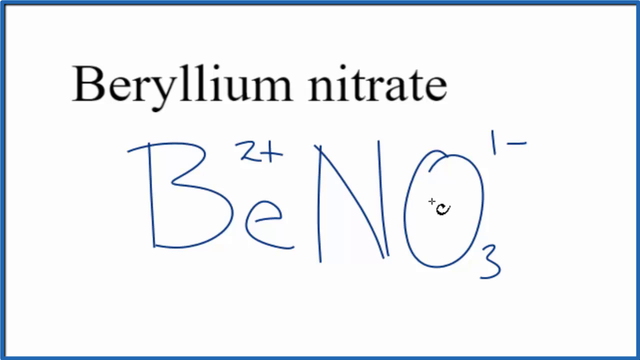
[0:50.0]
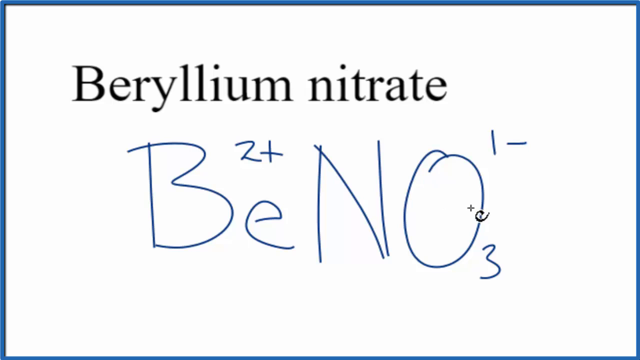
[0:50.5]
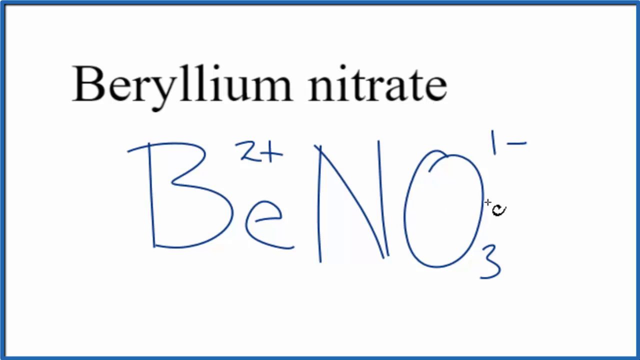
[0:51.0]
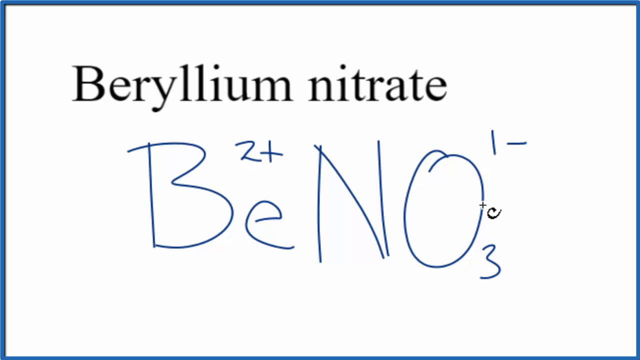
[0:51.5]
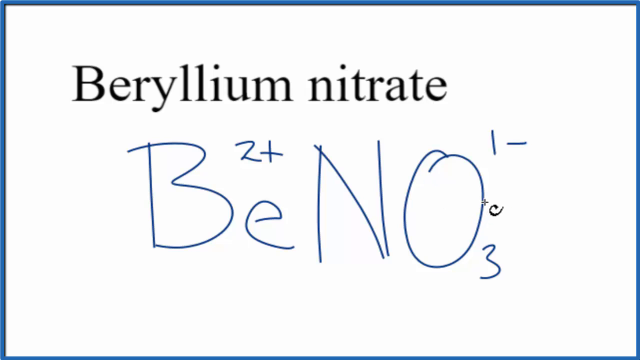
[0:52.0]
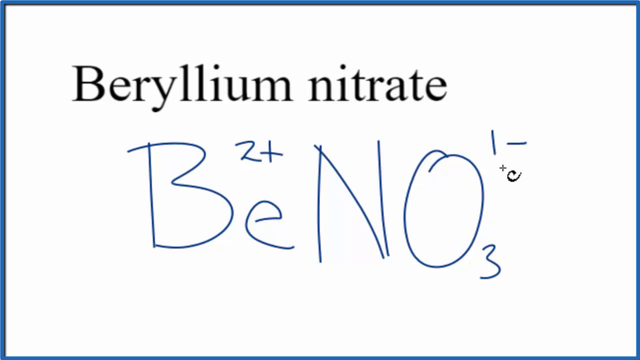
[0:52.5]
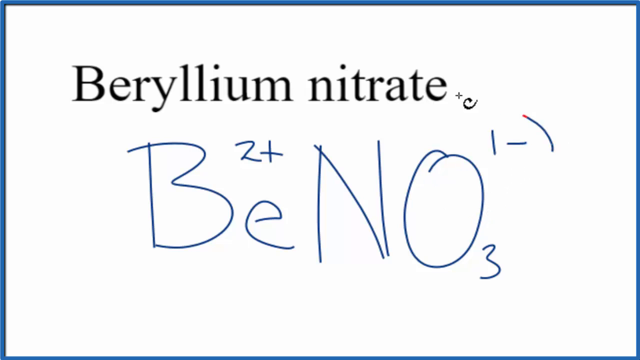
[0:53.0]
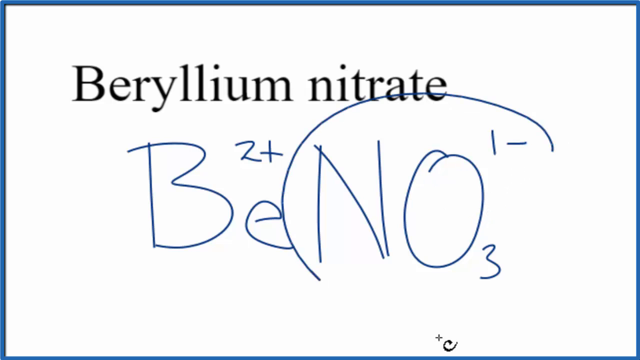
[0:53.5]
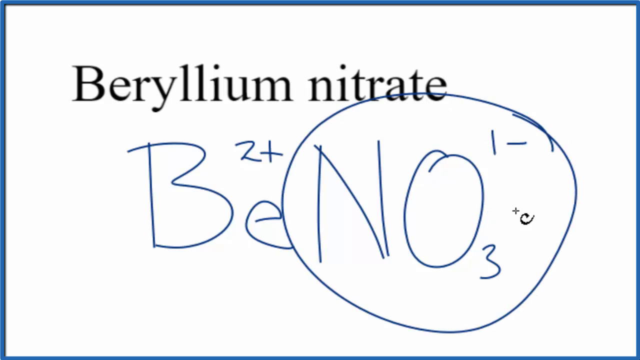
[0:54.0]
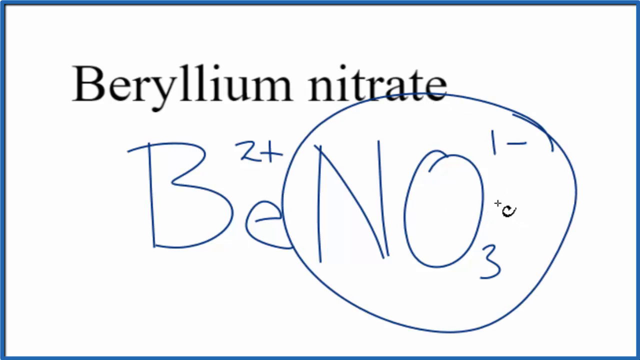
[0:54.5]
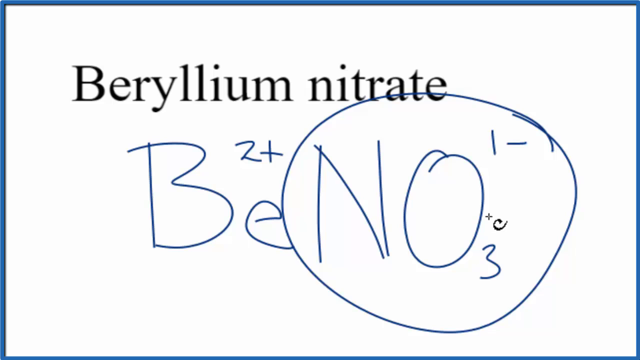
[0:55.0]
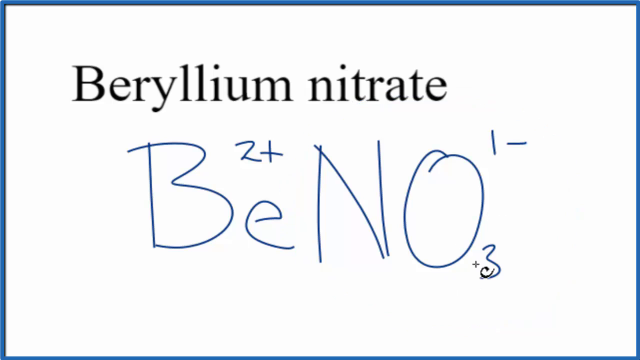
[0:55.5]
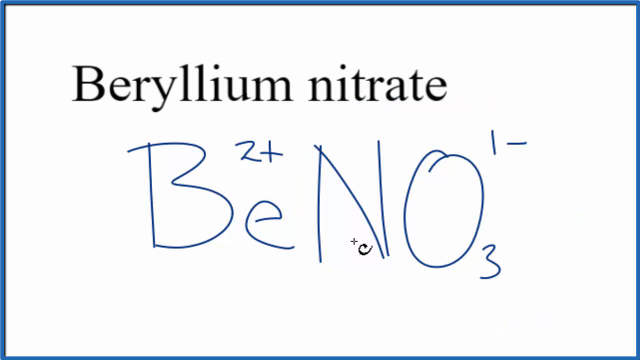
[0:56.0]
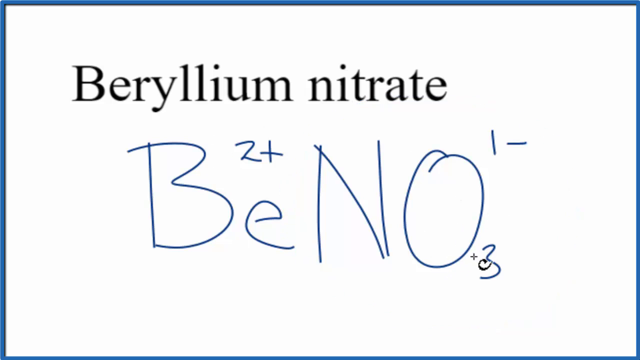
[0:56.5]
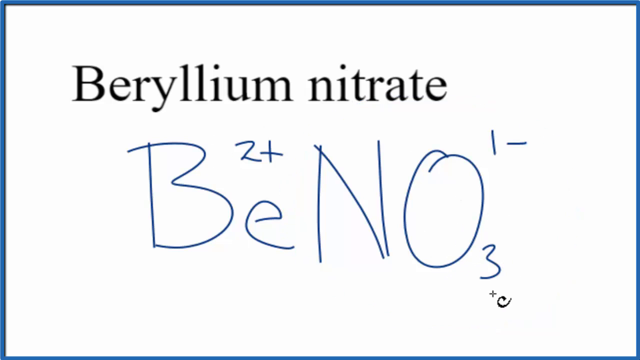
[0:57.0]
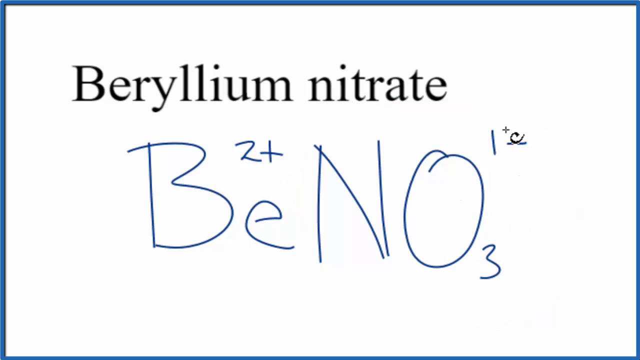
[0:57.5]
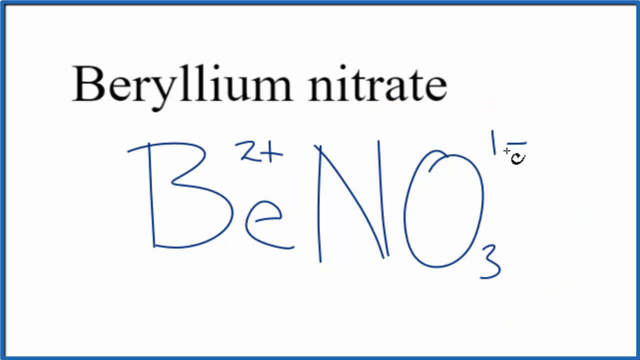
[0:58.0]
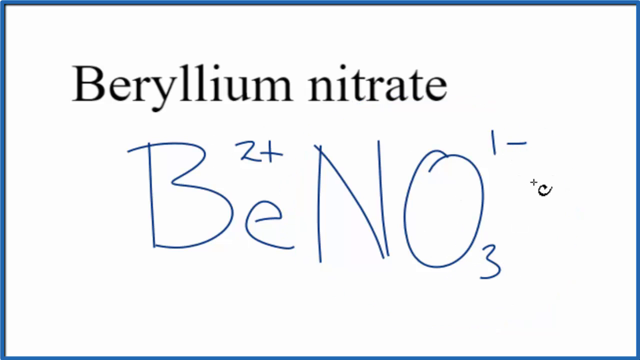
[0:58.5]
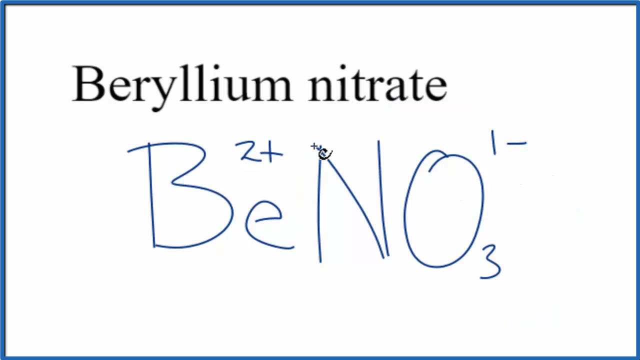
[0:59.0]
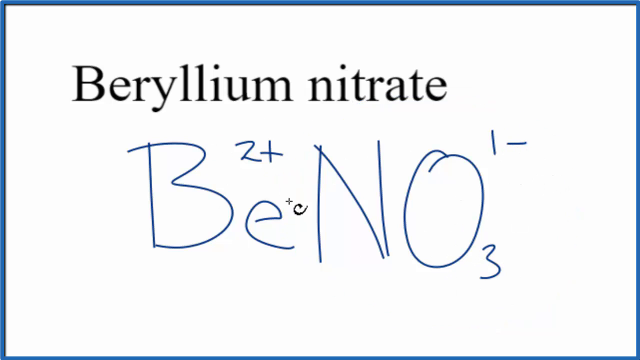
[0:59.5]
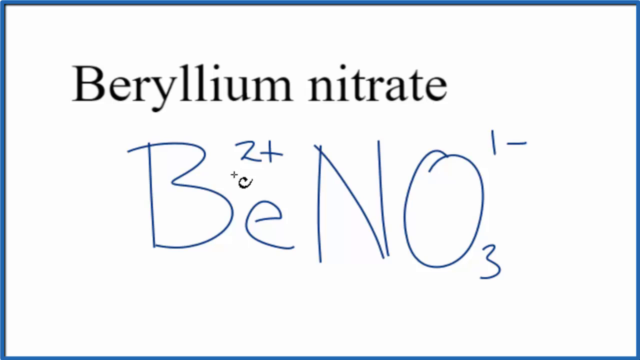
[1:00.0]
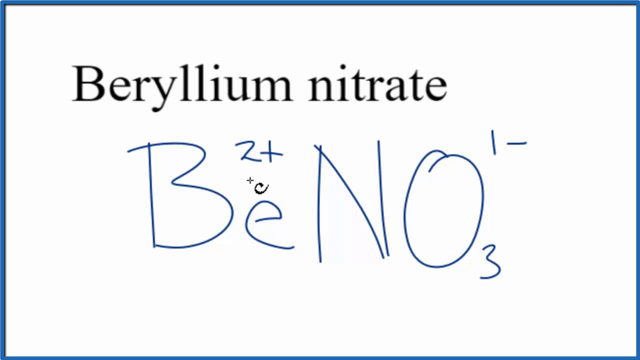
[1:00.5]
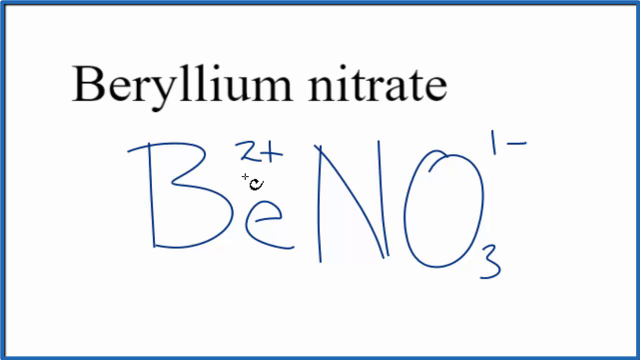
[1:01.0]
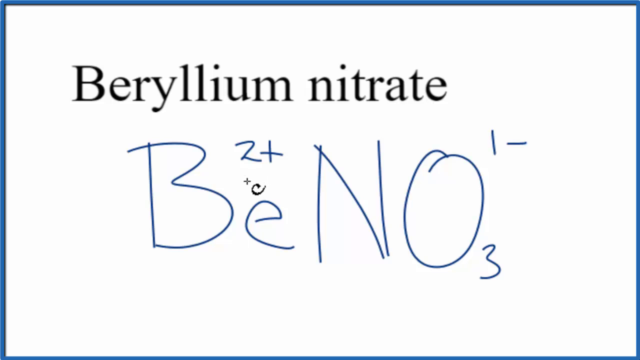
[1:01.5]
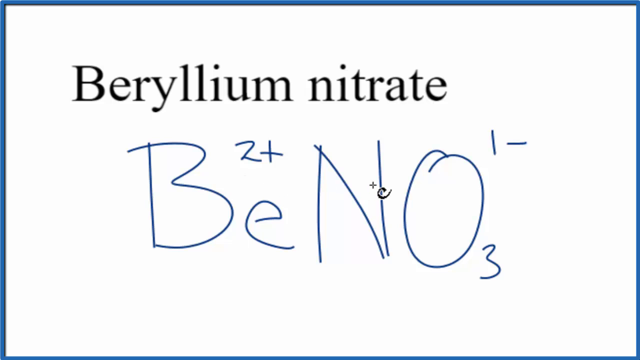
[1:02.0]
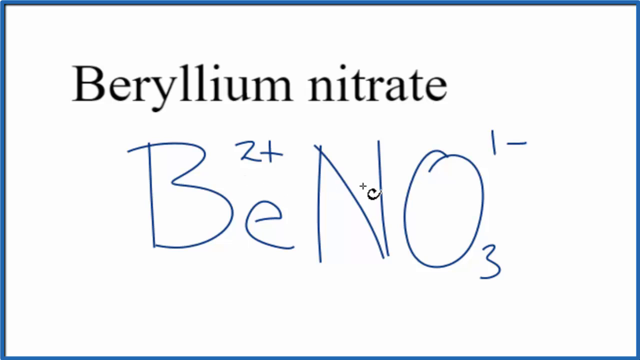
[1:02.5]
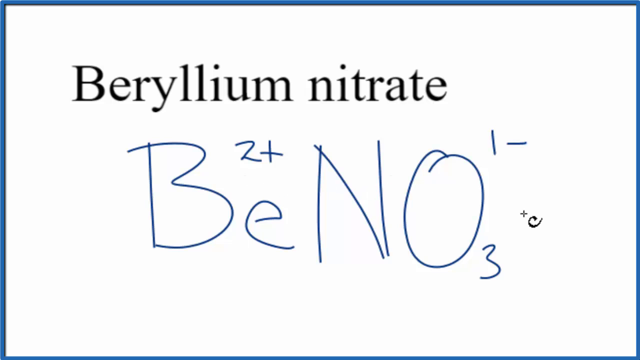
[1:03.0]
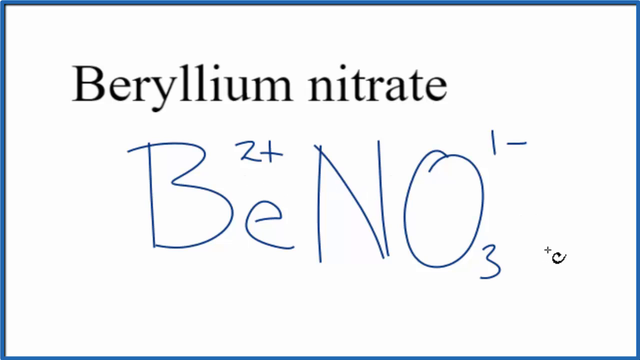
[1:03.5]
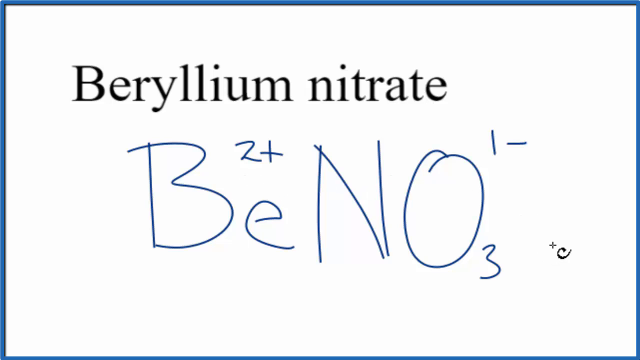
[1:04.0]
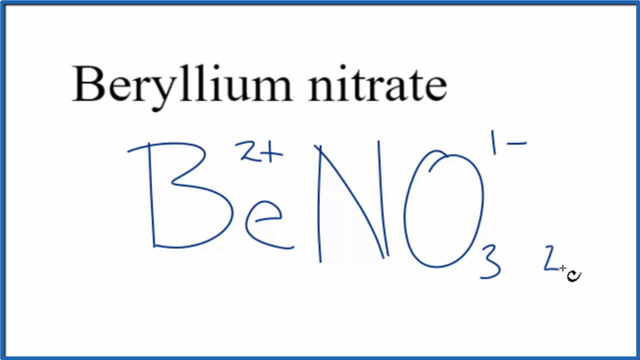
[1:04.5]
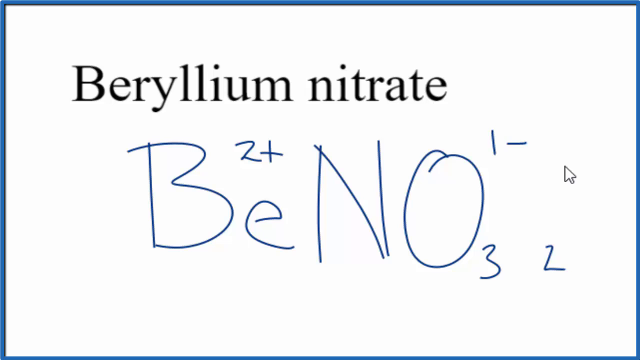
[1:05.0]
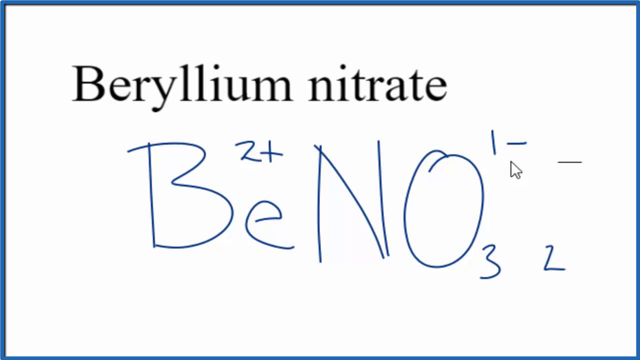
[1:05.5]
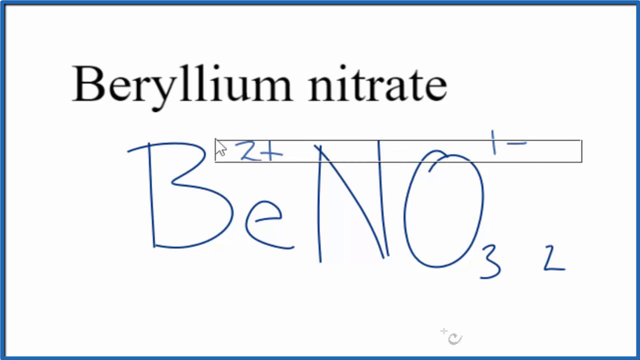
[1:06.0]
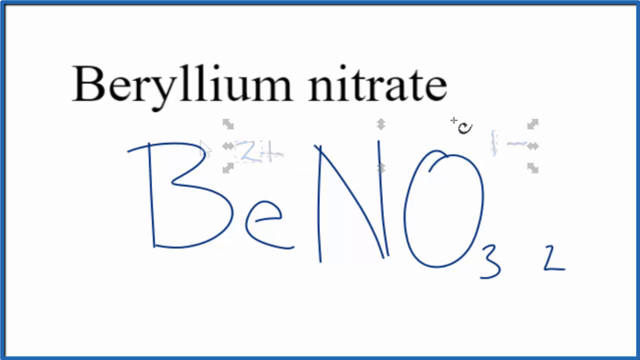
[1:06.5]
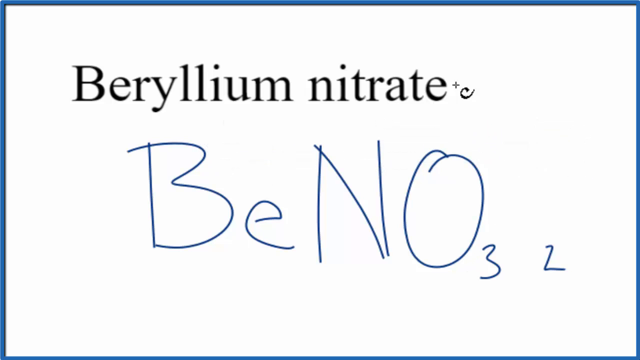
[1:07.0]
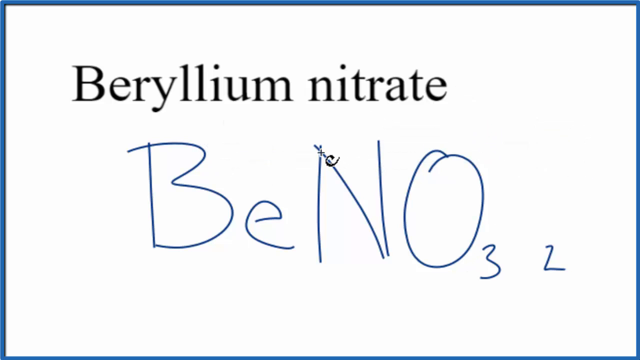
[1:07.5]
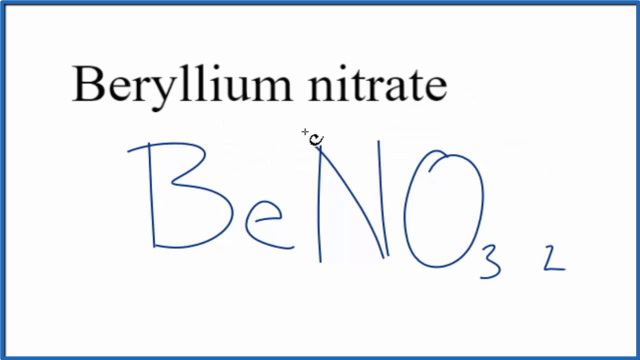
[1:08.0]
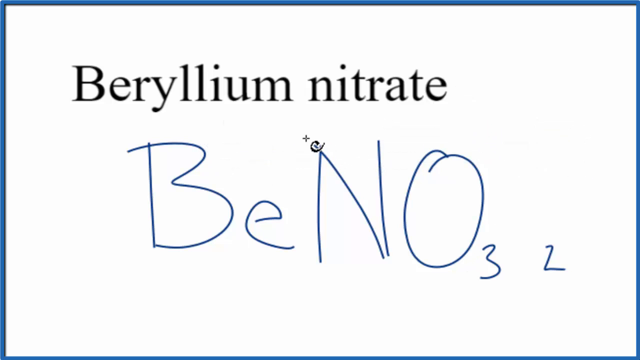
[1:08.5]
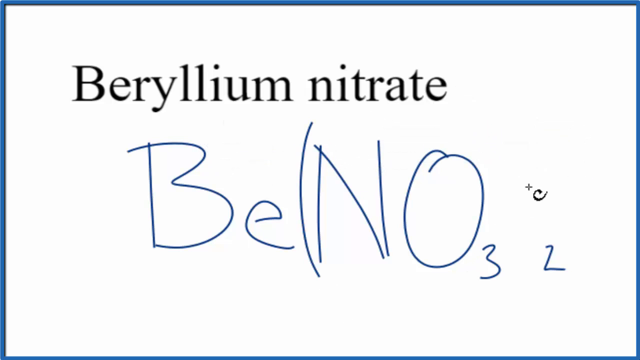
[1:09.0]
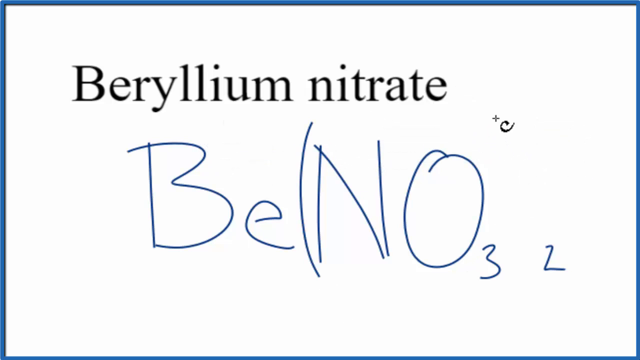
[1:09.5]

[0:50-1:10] A white screen has a black gradient at the bottom, which slowly disappears as the words "beryllium nitrate" appear. A cursor shaped somewhat like a C or a comet draws a wavy line under "beryllium" and a straight line under "nitrate." It writes a capital B and a little e; the B is somewhat floppy, with the bottom a little bigger than the top, and the E is not completely enclosed. It then writes a capital N and a capital O, both floppy with extra pieces. Above the O there is a 1 with a dash, and a 3 at the bottom. The cursor underlines BE and then NO, as two separate parts of the equation. It hovers above the E for a moment before putting a 2+ there, then goes to the end of the NO and circles it. It draws attention to the 1 dash and the 3 and circles around the BE with the 2+ above it. The cursor bounces around jerkily, draws a square on the screen, and puts parentheses over the NO. It circles the NO once more, then circles the entire equation, waves over it without marking anything, and puts a 2 at the far end.